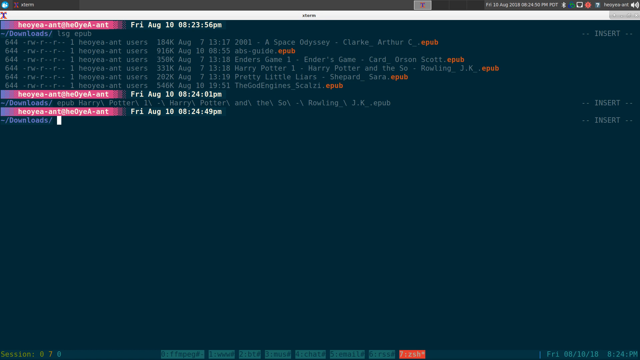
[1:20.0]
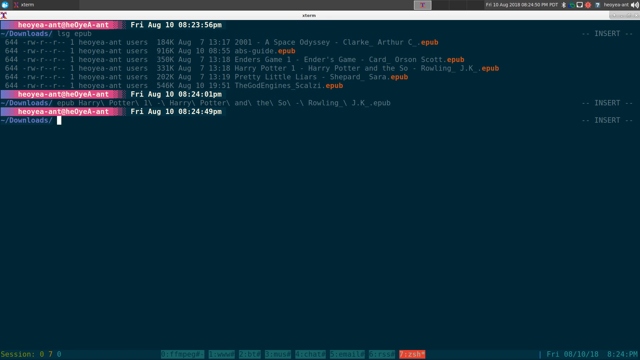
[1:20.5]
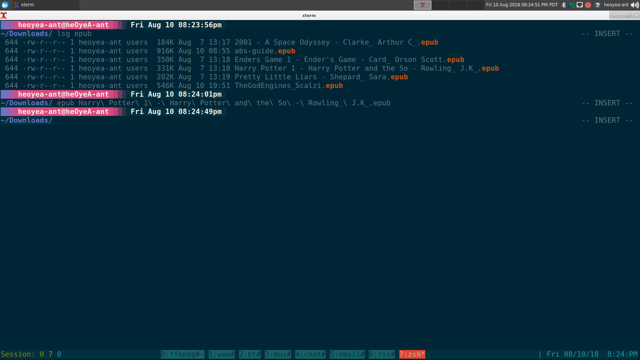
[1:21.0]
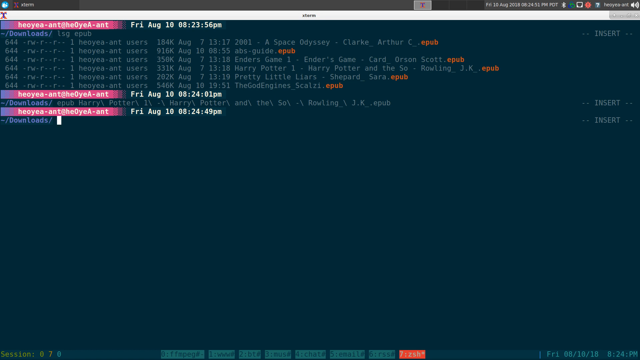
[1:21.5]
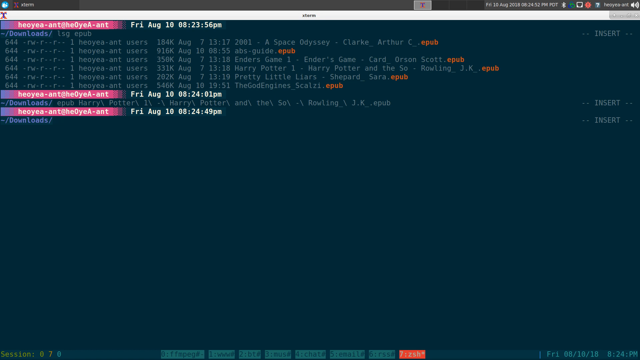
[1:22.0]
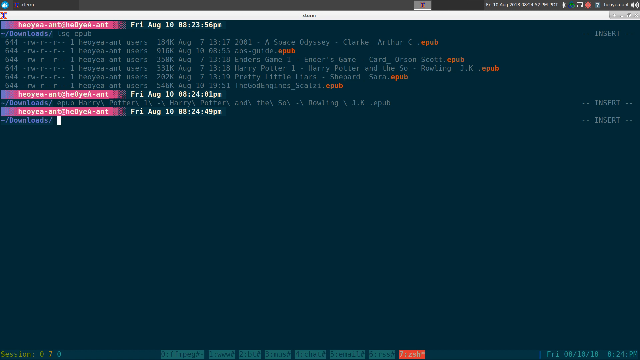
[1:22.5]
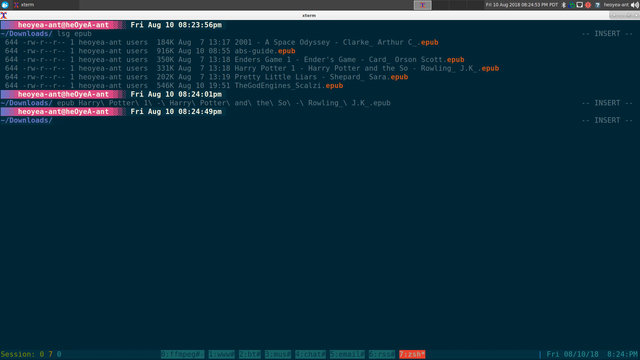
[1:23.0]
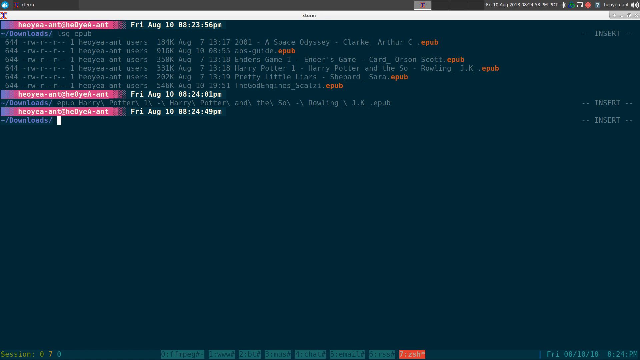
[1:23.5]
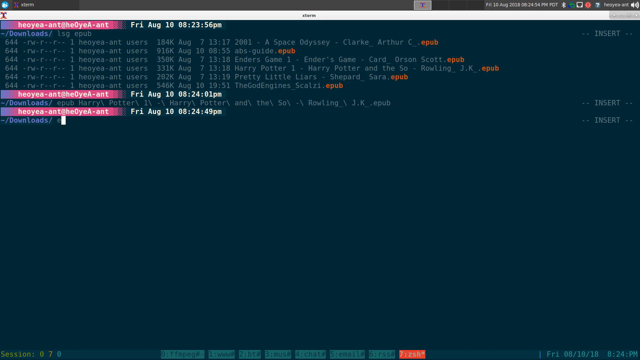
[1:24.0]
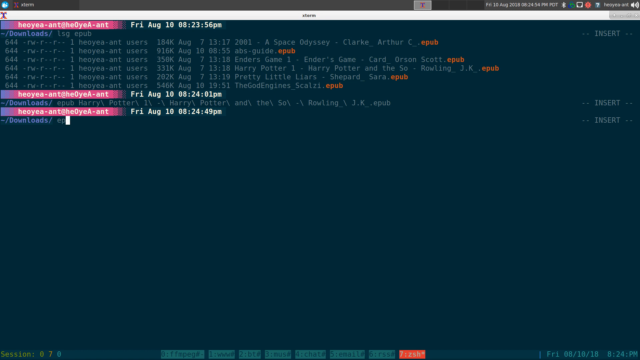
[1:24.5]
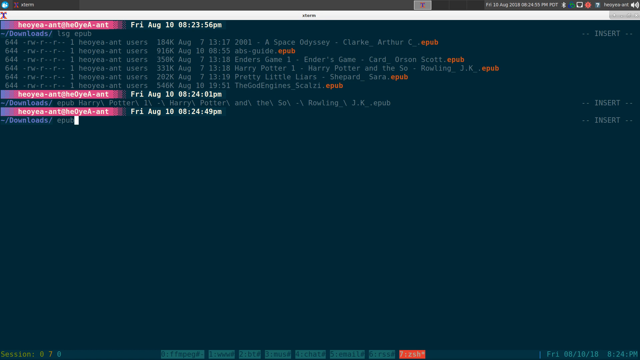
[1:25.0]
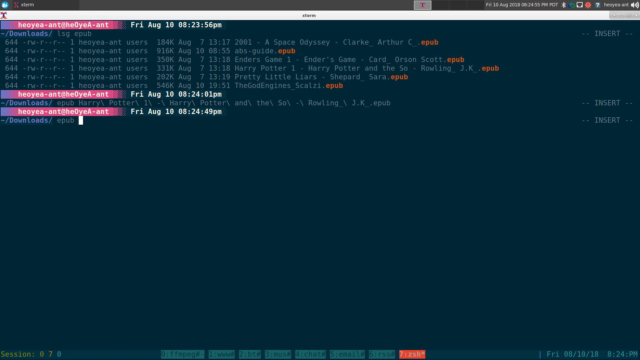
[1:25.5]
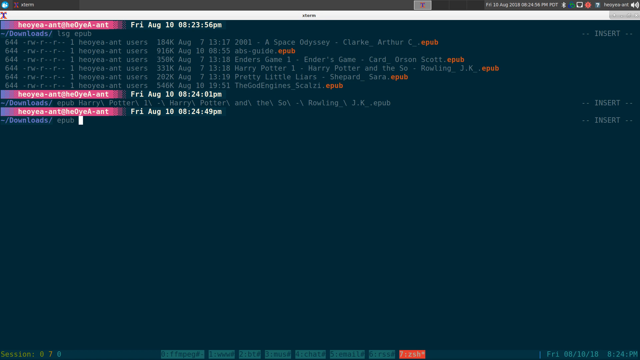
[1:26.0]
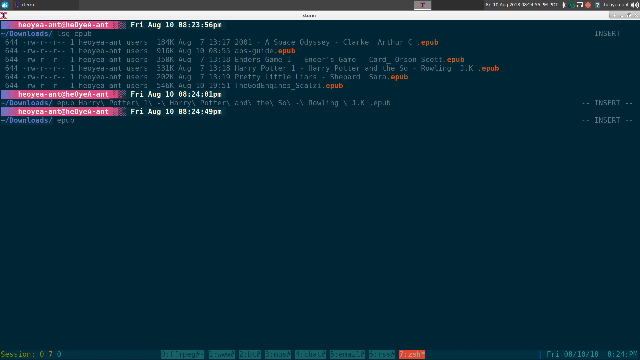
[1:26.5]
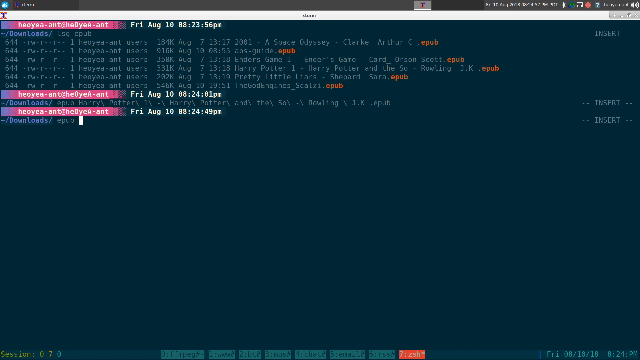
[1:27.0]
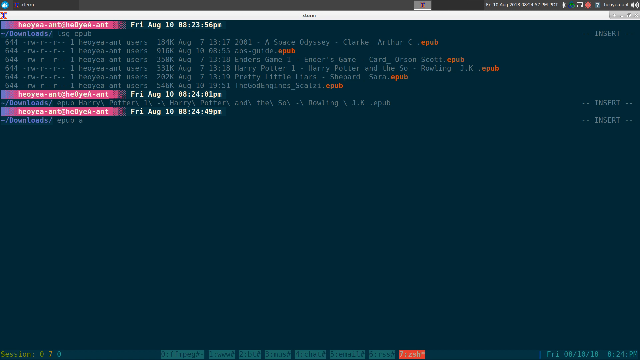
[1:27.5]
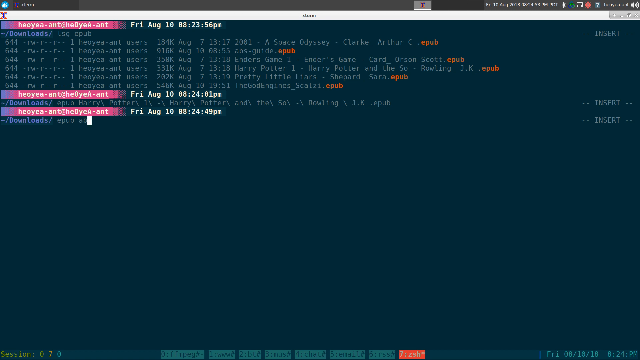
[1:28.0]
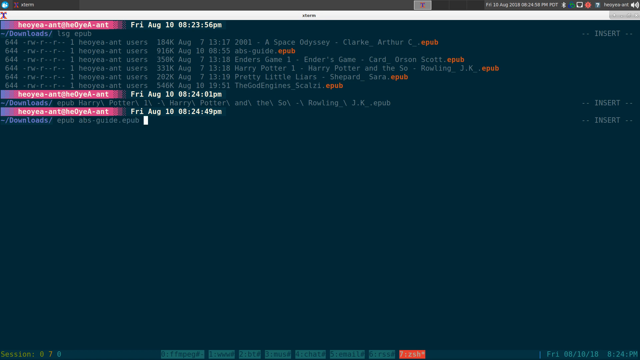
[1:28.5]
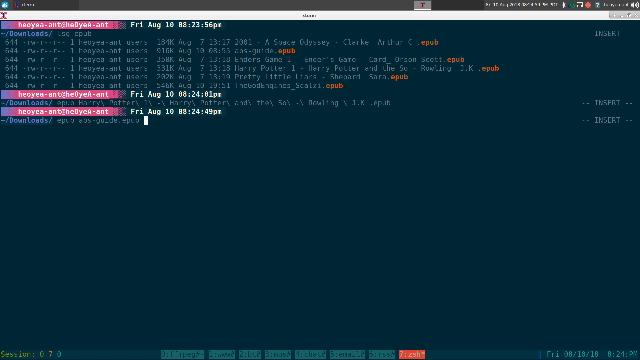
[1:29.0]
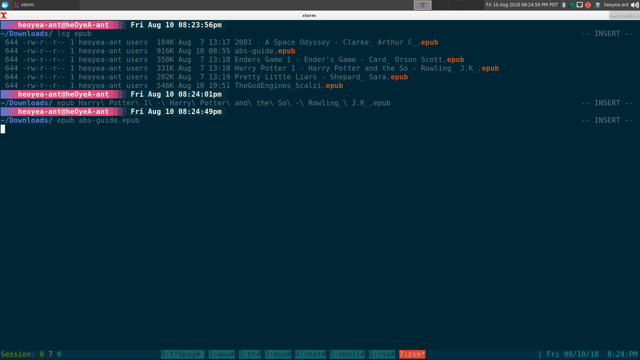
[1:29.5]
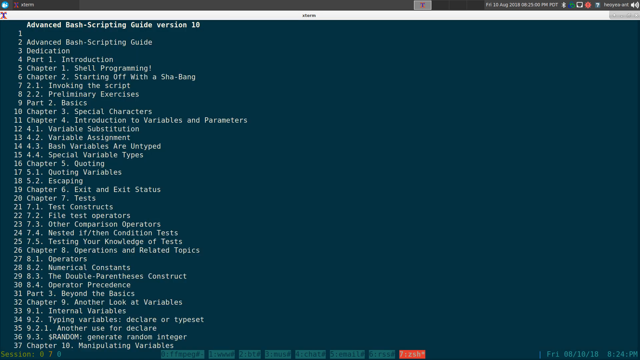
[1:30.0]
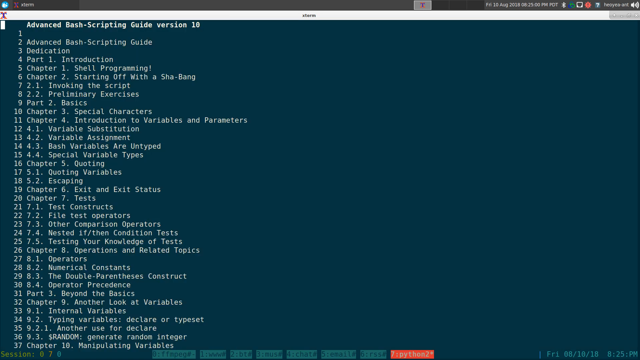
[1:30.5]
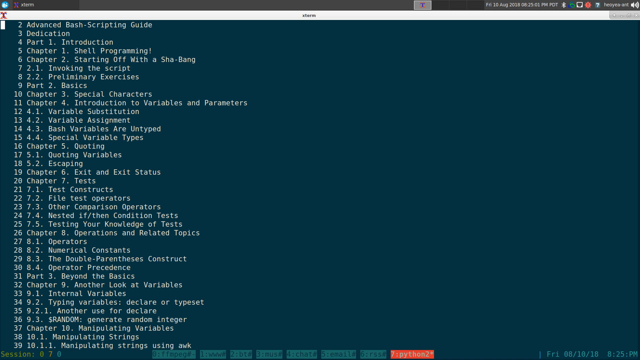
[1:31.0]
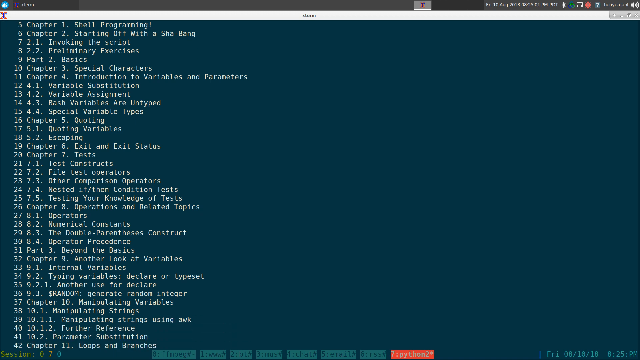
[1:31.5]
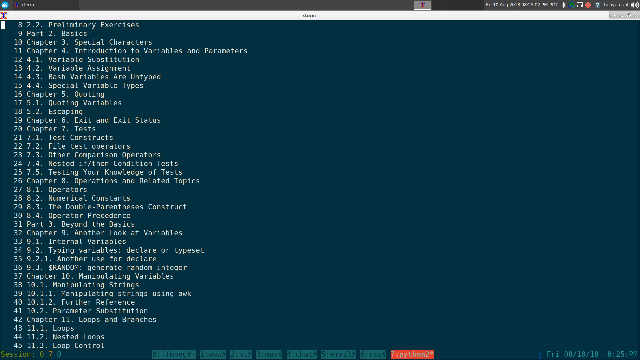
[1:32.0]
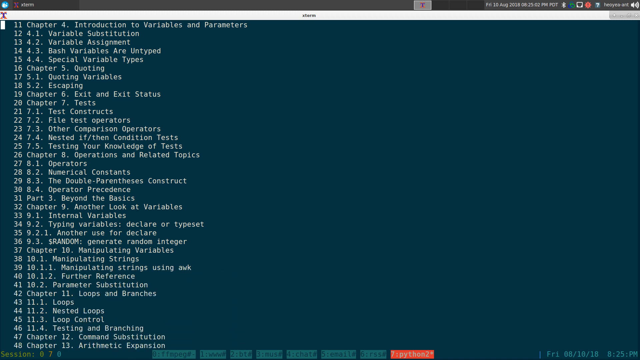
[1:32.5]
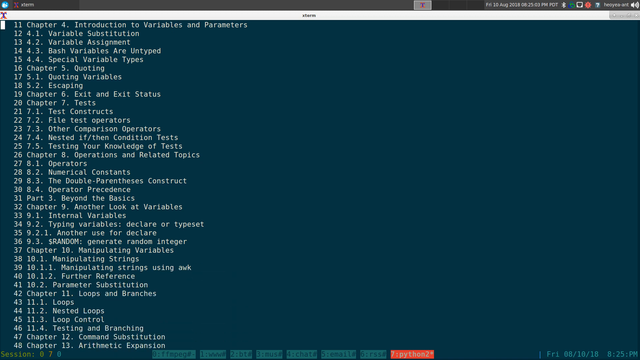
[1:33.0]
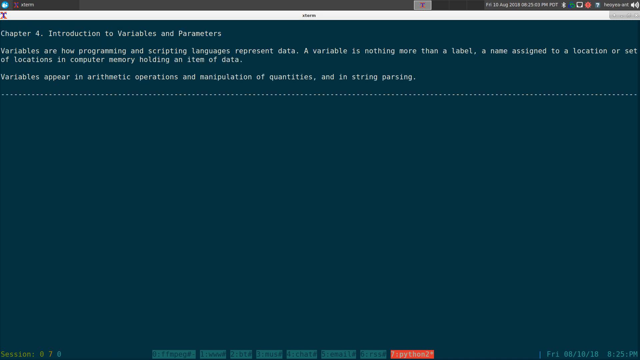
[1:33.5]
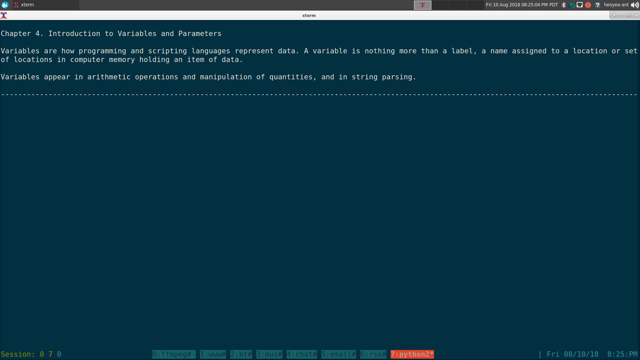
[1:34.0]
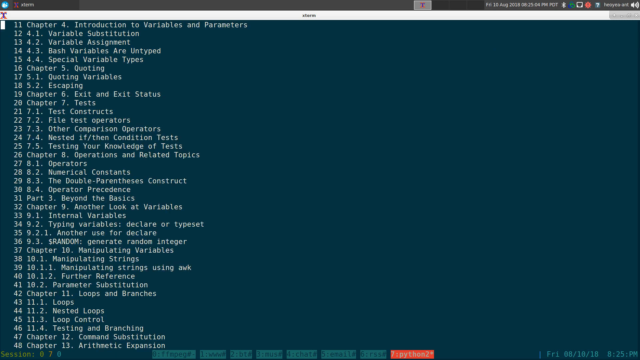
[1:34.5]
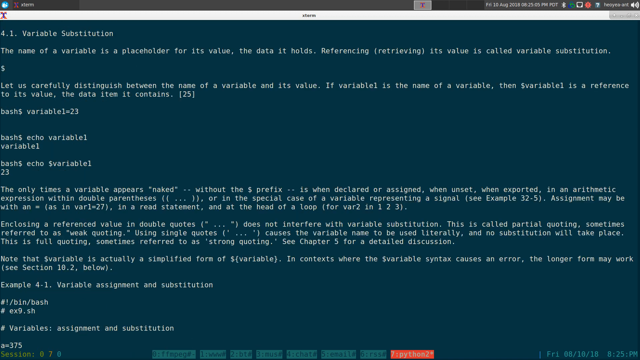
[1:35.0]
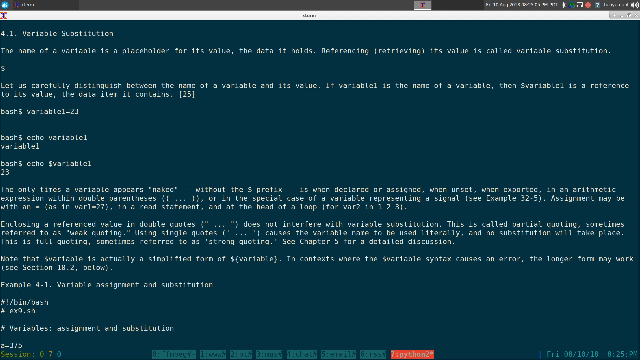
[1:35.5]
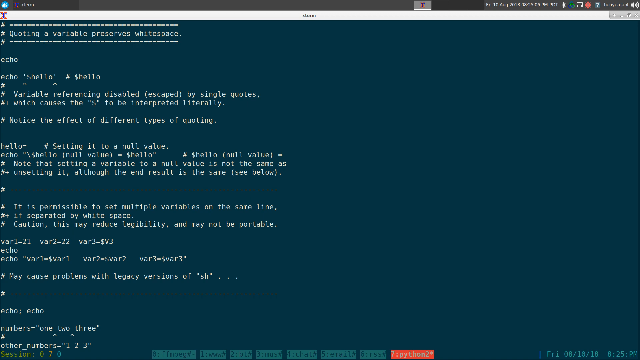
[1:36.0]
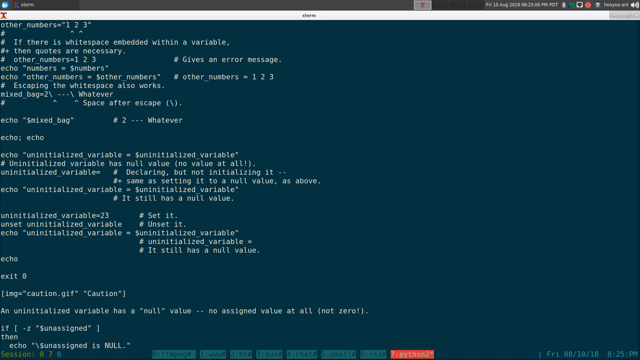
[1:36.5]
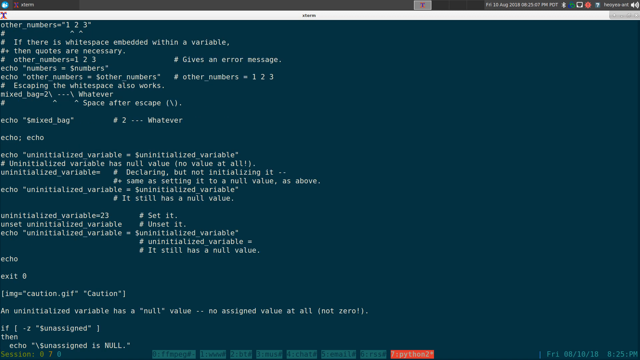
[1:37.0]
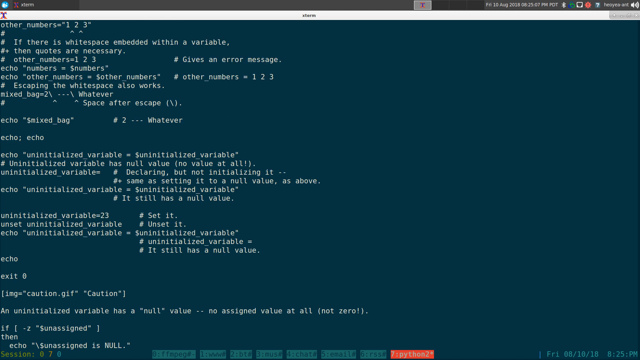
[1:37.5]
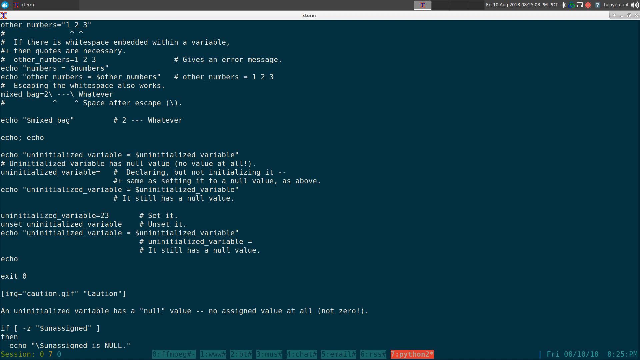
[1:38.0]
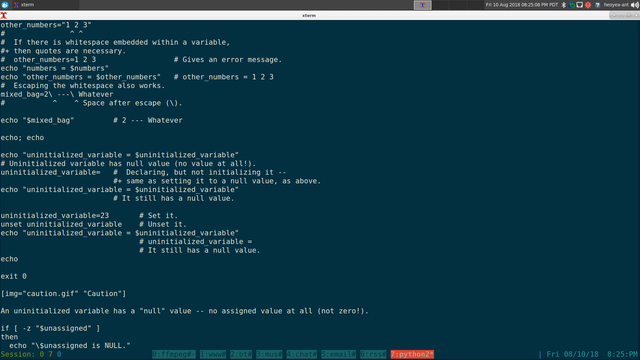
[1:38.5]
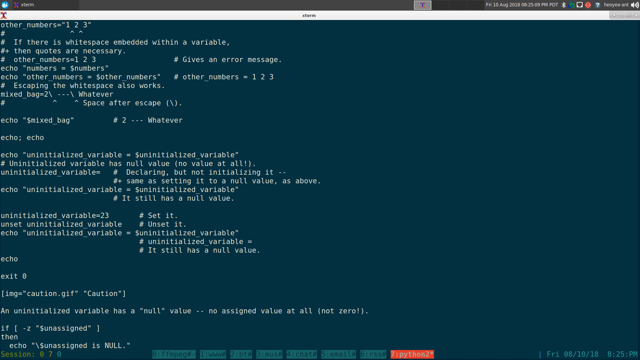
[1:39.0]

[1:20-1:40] The cursor blinks after the downloads folder, and the user types "epub abs-guide.epub" and presses enter. A file titled "advanced bash scripting guide version 10" appears, and it seems to be printing a table of contents in the same way as the Harry Potter book. There are multiple chapters, with subheadings under every chapter and titles next to them. The user opens chapters and sections in the same way. They first open chapter 4, entering a section about introduction to variables and parameters that contains only a description. They exit that and open "4.1 variable substitution", which has more complete content and seems to be a chapter with actual content. They scroll through it before completely exiting the book.